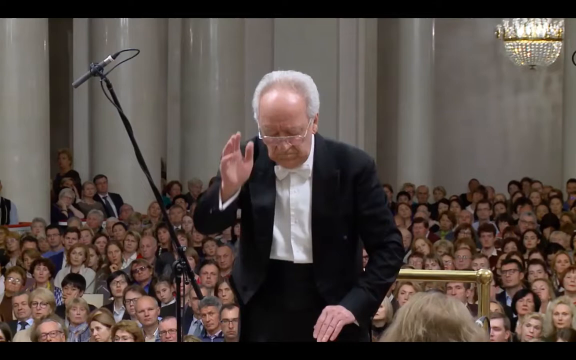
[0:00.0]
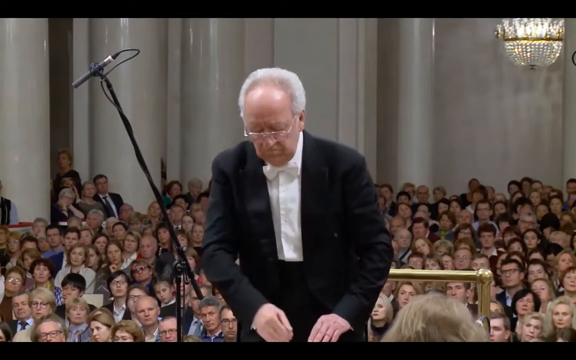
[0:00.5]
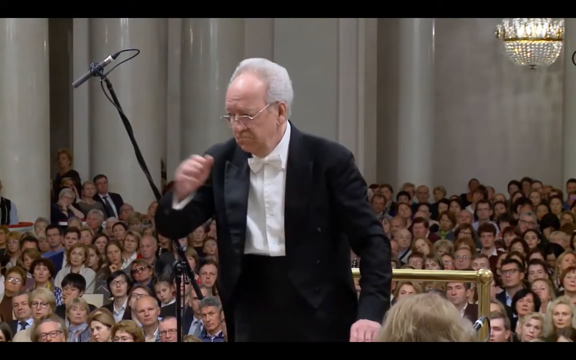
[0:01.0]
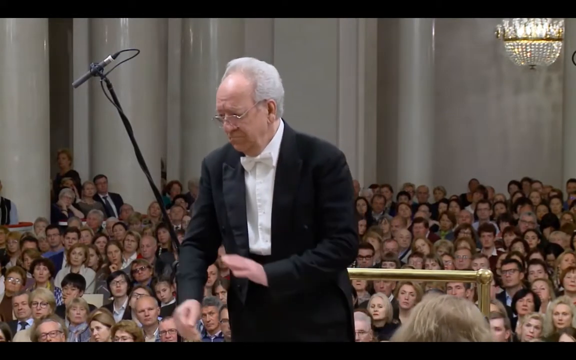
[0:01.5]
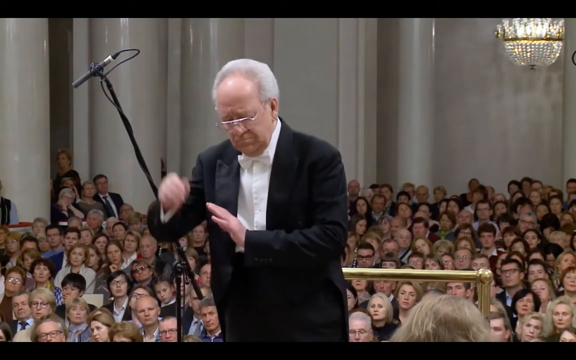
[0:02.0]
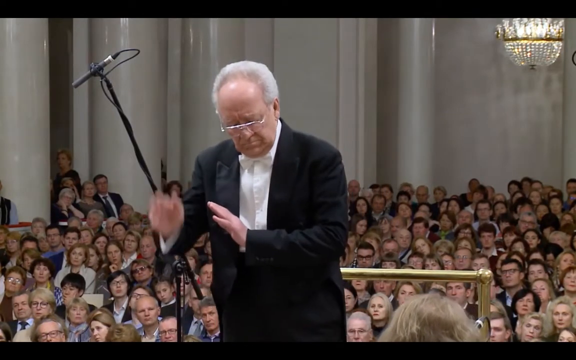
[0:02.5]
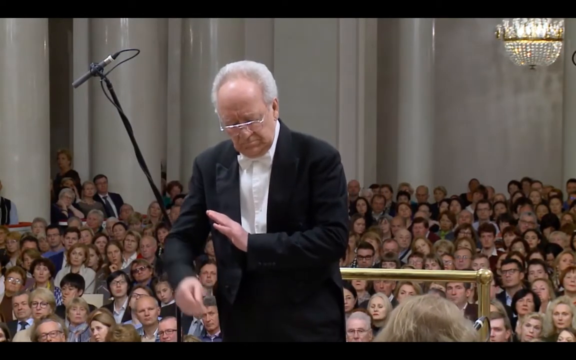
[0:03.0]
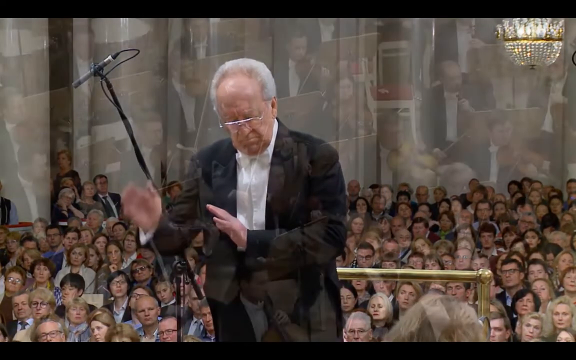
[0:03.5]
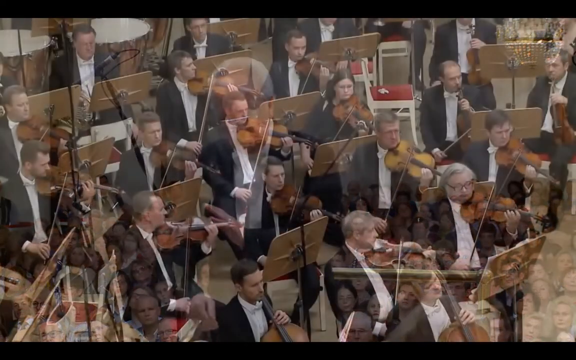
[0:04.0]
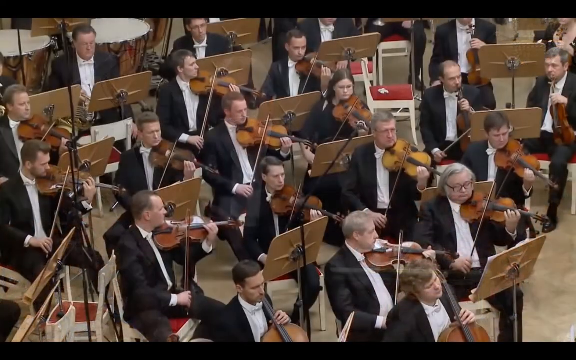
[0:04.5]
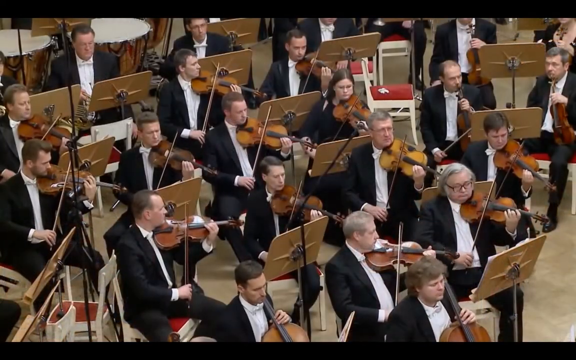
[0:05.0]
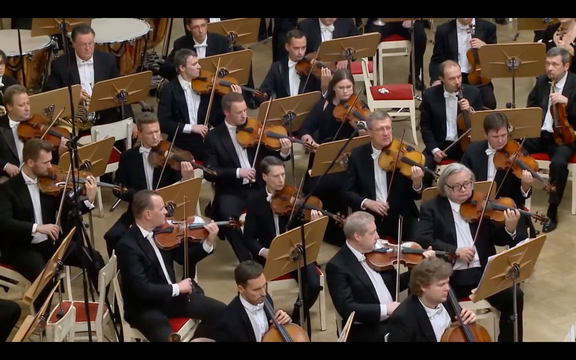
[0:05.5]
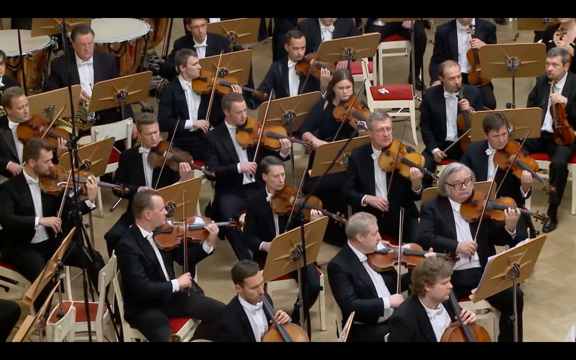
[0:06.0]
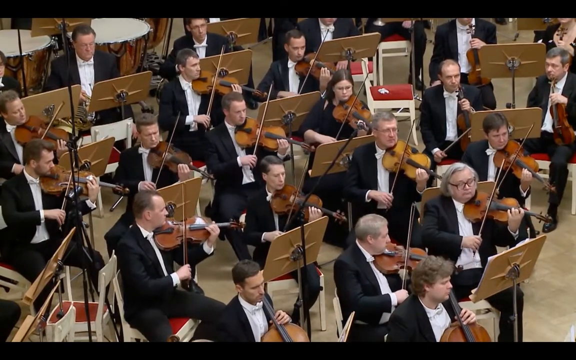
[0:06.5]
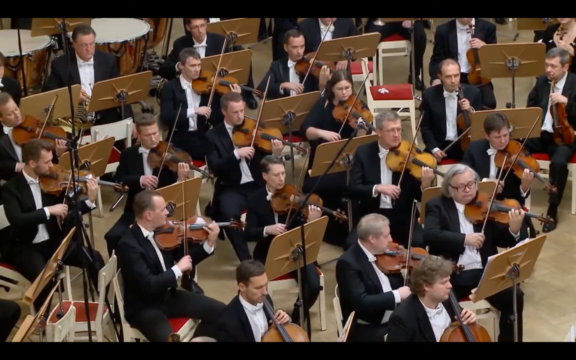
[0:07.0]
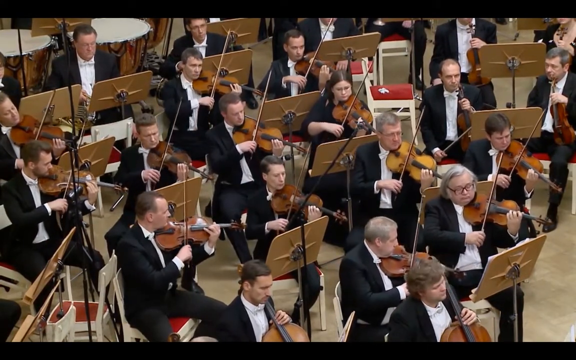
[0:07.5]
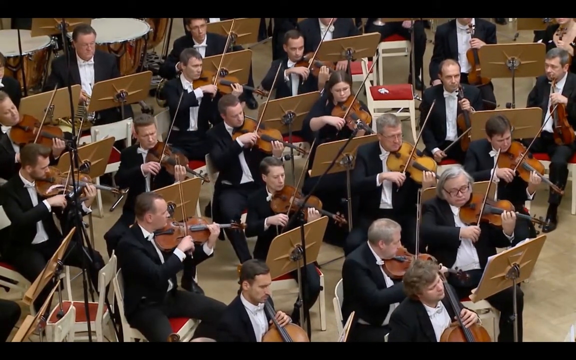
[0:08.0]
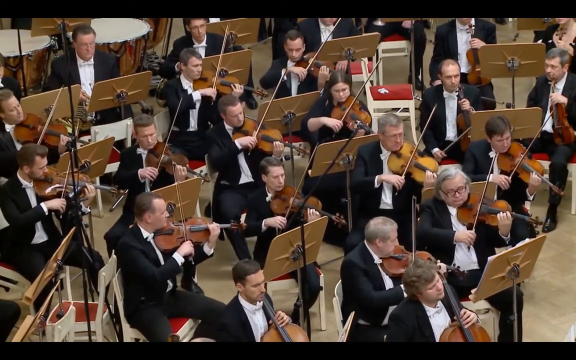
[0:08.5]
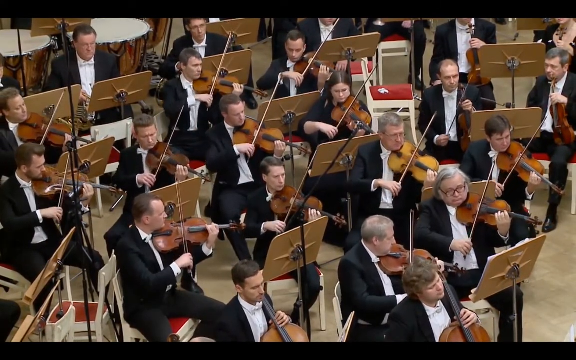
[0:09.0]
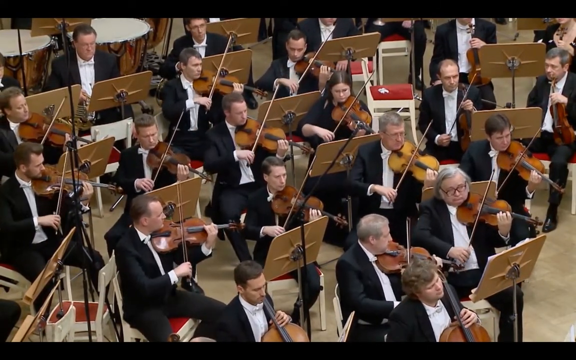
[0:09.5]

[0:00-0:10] An old conductor with glasses, white balding hair, and a tuxedo with a white shirt faces the camera, waving his right hand up and down while his left hand is across his chest. Behind him is a crowd of around 50 to 60 visible people, their faces turned toward the conductor. The venue looks fairly elaborate and high-class, with a chandelier, white walls, and two columns. The scene then changes to what looks like an orchestra arranged in a semicircle, with around four rows of violinists visible, around 15 of them, all playing.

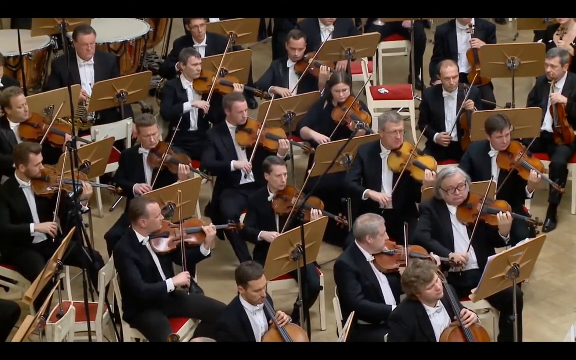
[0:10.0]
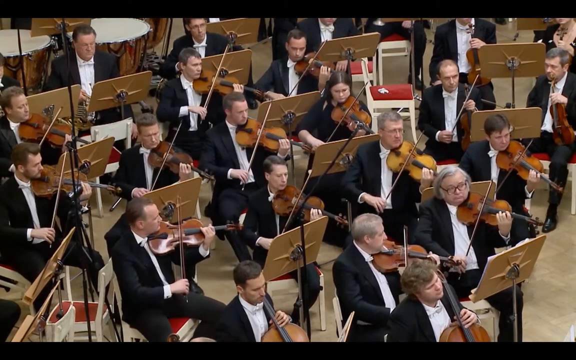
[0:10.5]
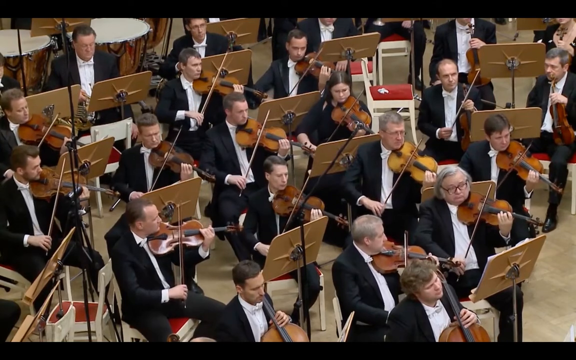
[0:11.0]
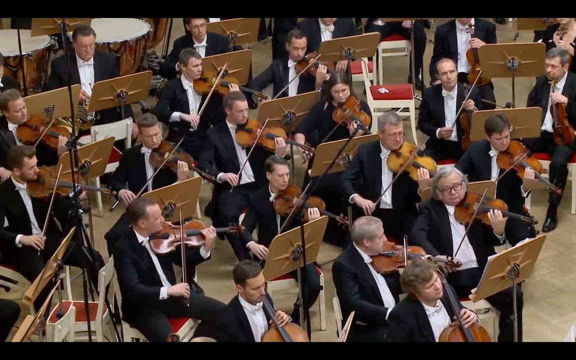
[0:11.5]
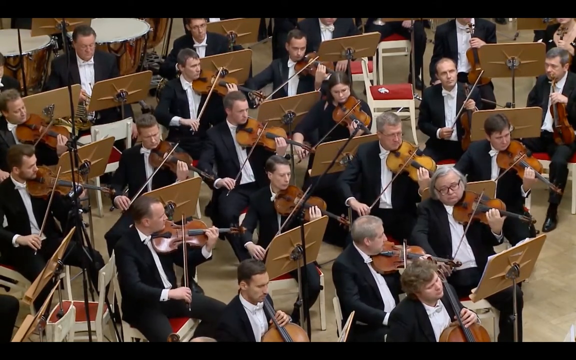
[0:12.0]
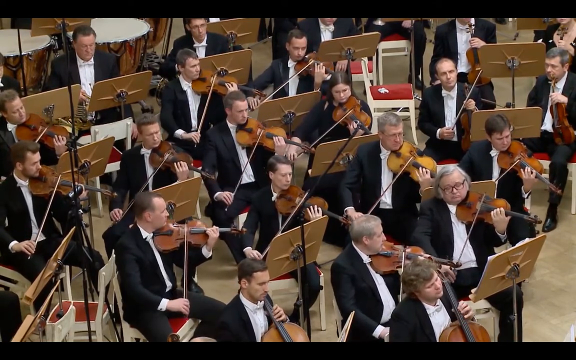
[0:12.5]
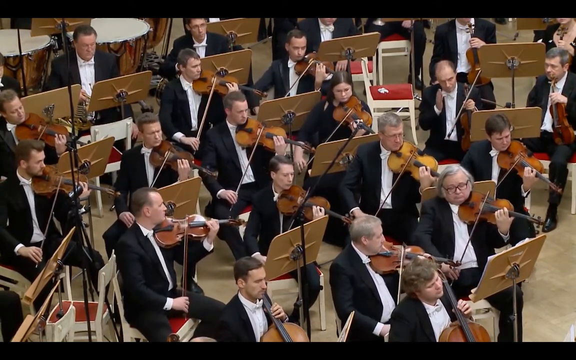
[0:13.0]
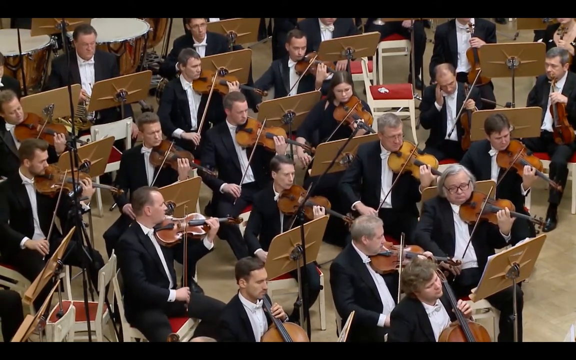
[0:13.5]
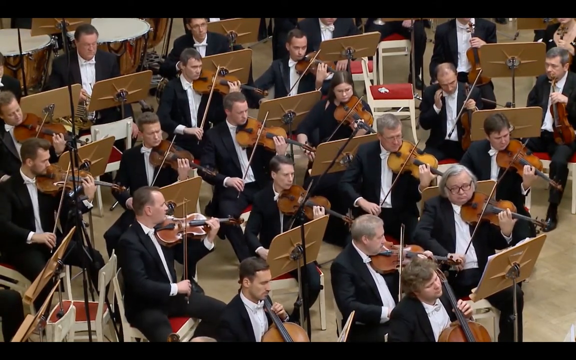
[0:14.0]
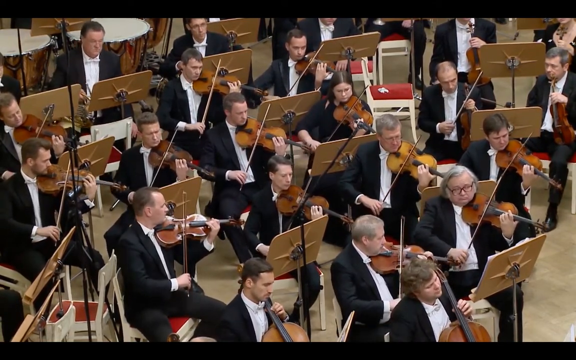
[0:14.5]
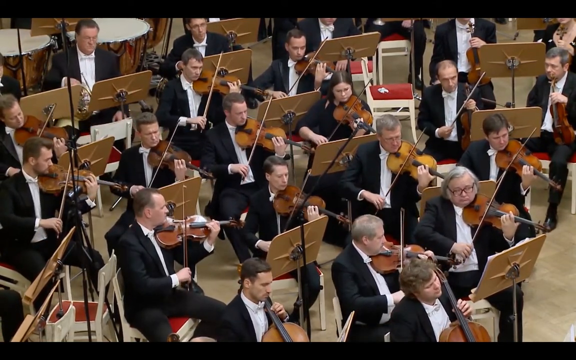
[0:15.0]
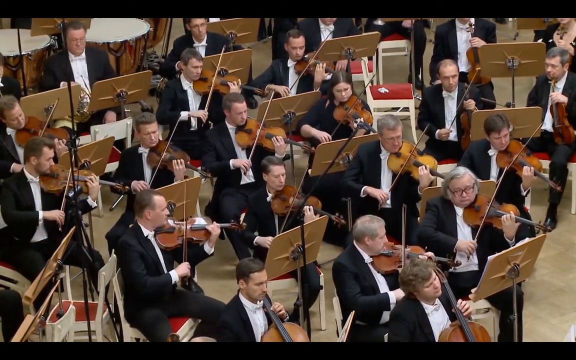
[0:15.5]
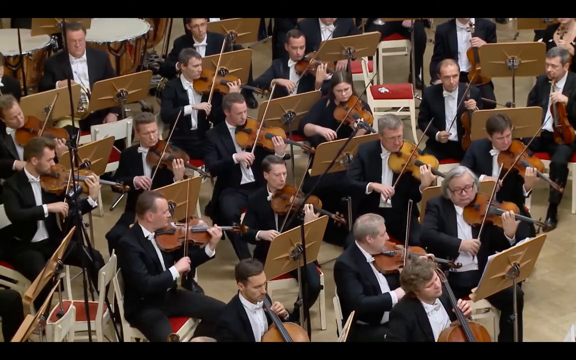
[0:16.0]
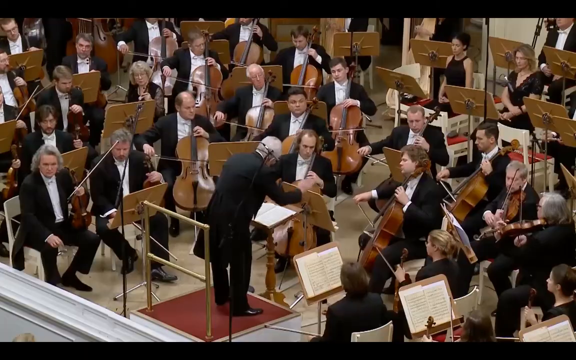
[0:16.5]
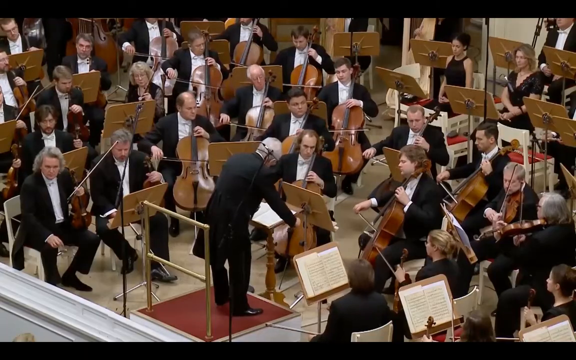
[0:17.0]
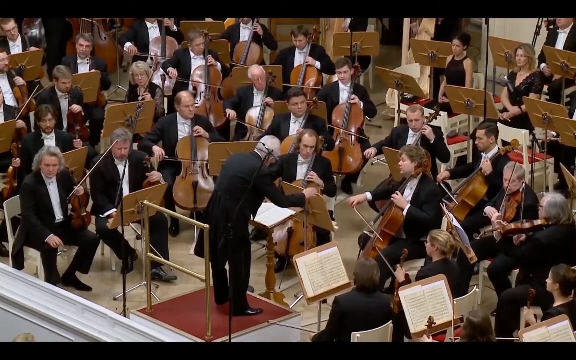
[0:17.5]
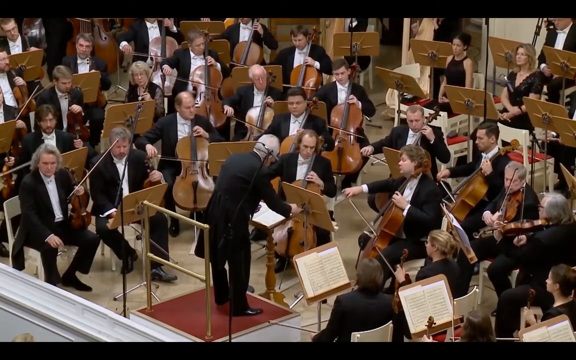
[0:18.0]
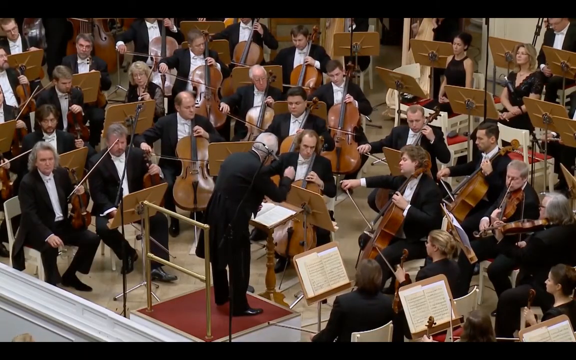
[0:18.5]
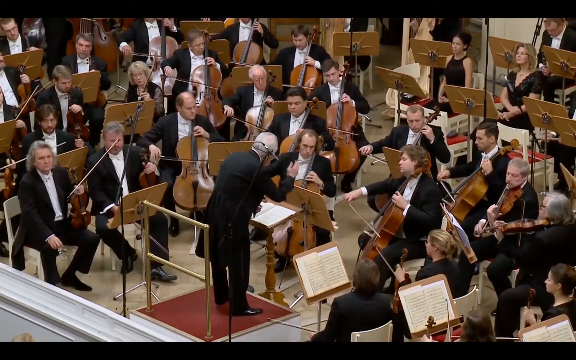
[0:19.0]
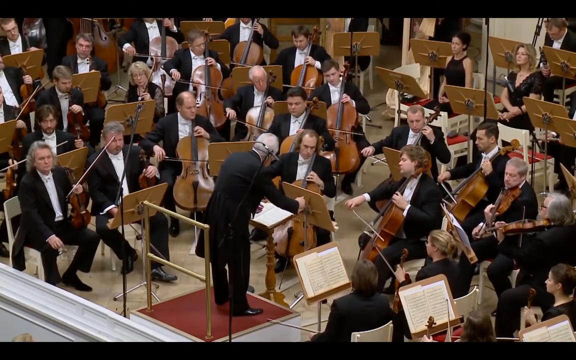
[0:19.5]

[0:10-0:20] Many violinists are positioned in around five rows in a semicircle, seen from above looking down at them. They play in synchrony, all sitting and looking at music stands, and wear suits with white dress shirts underneath. The scene then pans out to another view of the semicircle, showing more violinists and cellists in around five rows, all facing toward the middle at the bottom of the frame, where the conductor is standing. The conductor faces away from the camera and to the right. All the violinists and cellists play while facing the conductor. Everyone wears black suits, and the conductor wears a tuxedo.